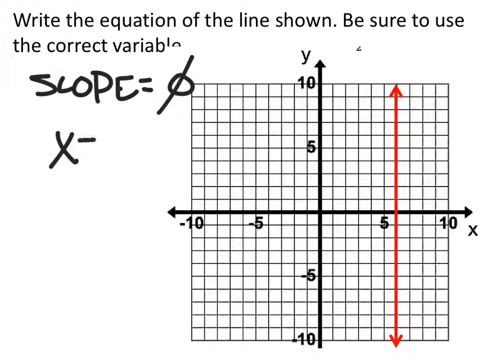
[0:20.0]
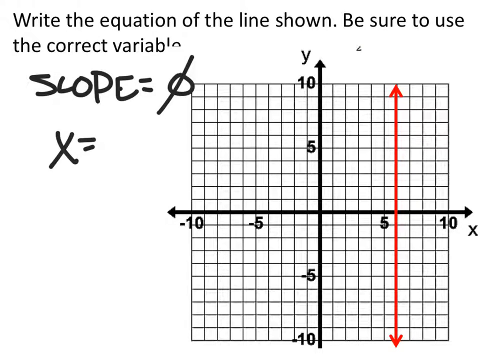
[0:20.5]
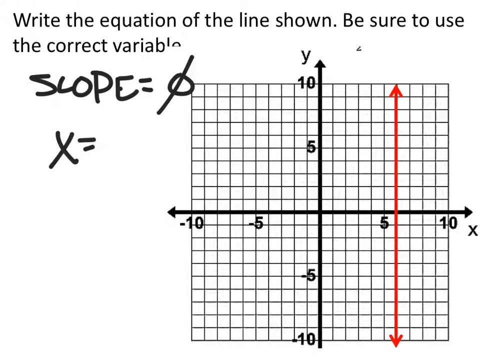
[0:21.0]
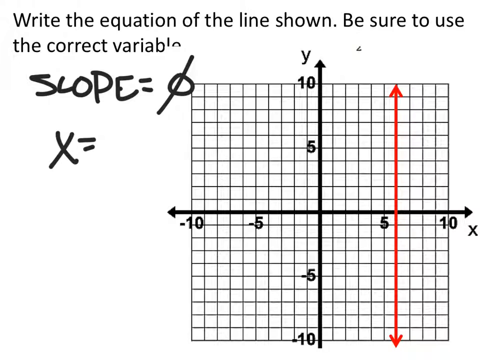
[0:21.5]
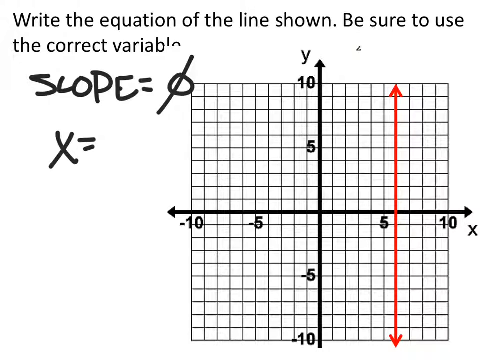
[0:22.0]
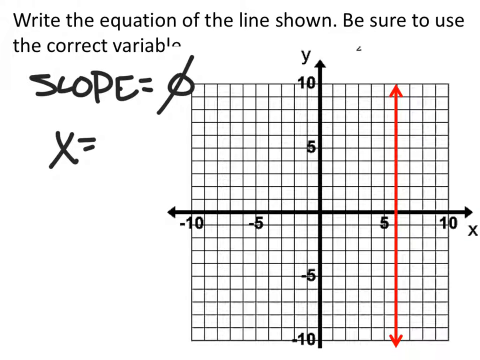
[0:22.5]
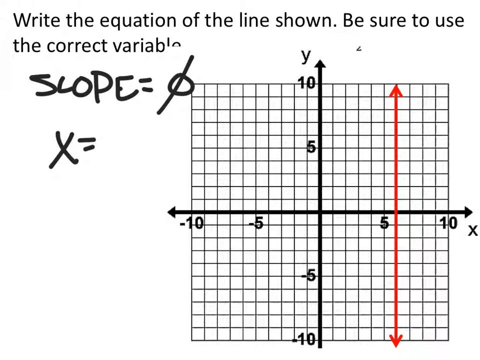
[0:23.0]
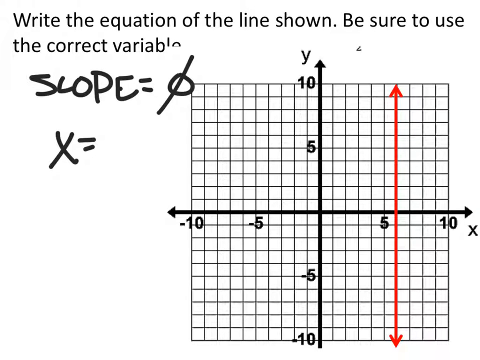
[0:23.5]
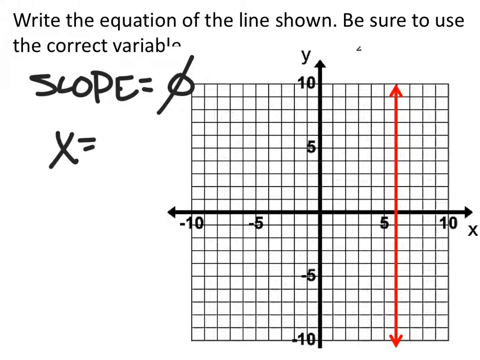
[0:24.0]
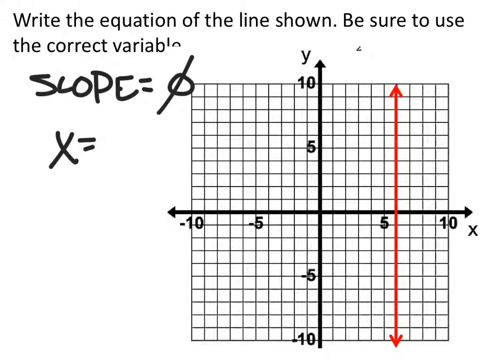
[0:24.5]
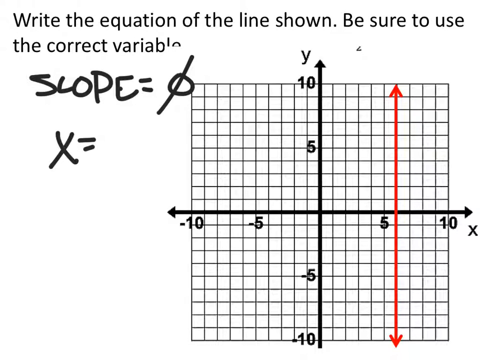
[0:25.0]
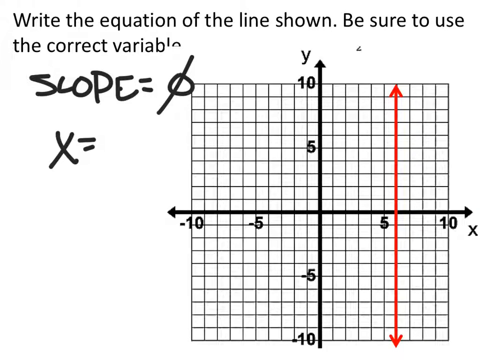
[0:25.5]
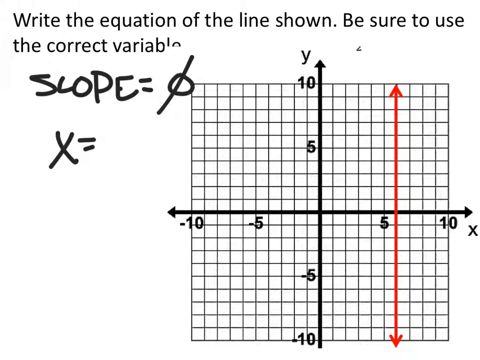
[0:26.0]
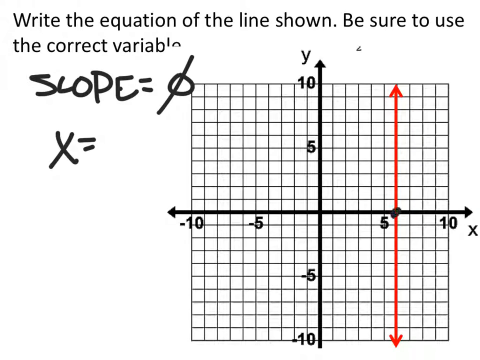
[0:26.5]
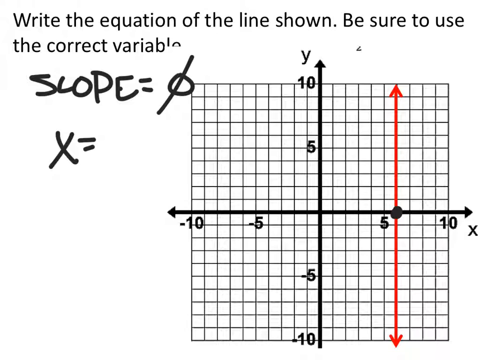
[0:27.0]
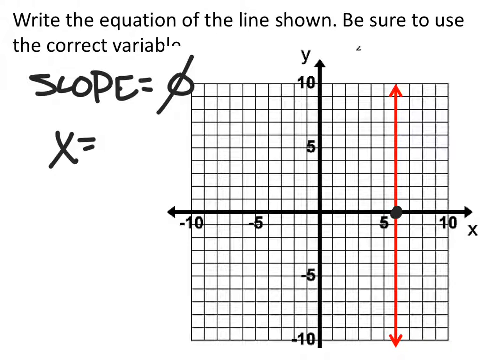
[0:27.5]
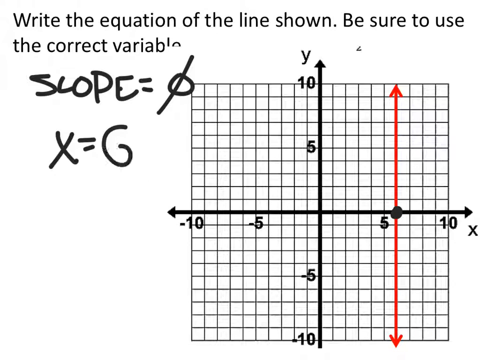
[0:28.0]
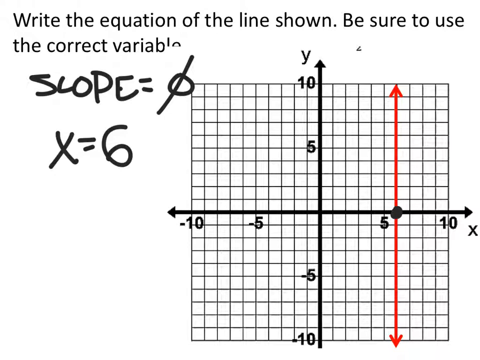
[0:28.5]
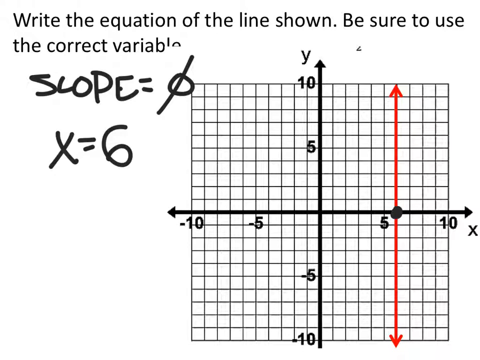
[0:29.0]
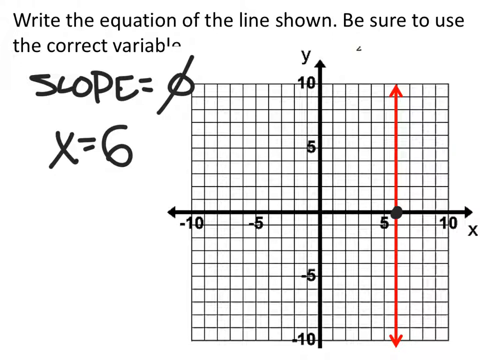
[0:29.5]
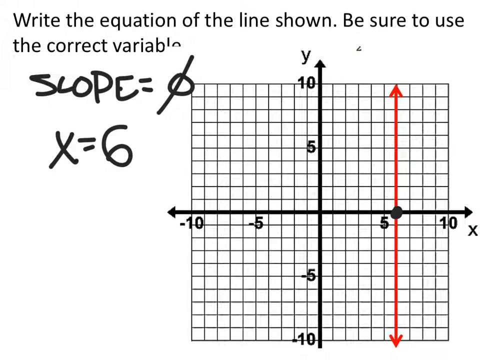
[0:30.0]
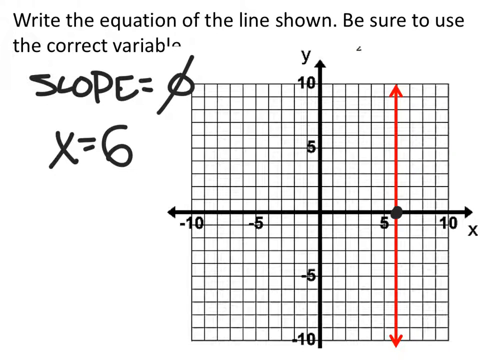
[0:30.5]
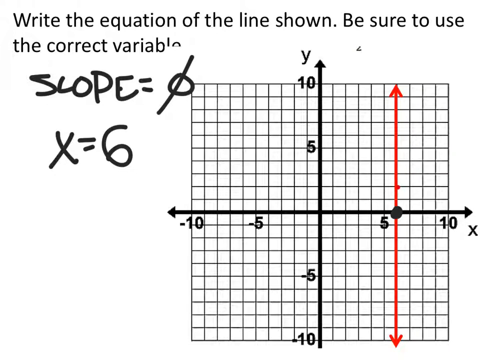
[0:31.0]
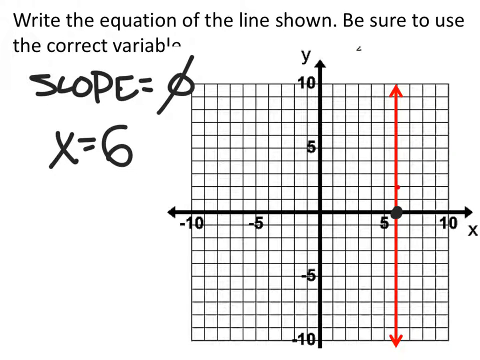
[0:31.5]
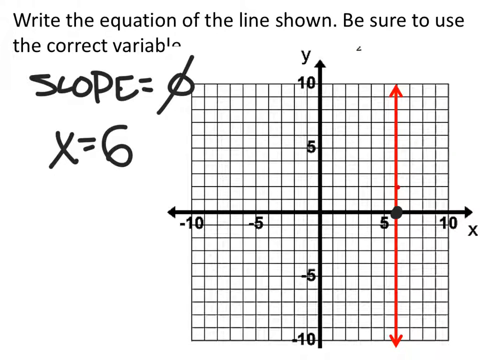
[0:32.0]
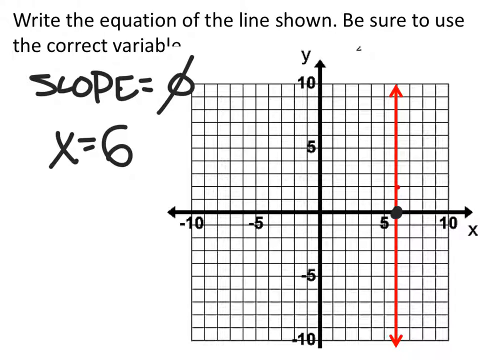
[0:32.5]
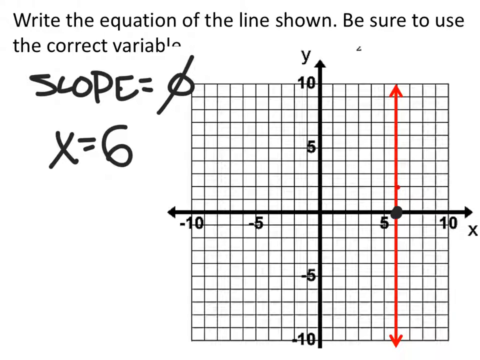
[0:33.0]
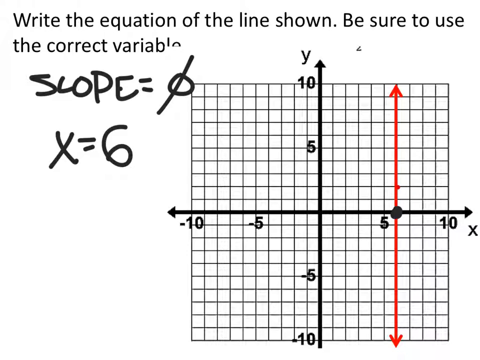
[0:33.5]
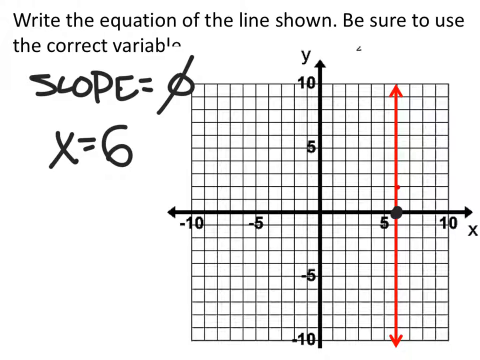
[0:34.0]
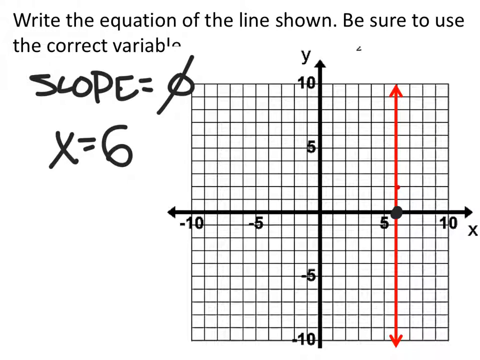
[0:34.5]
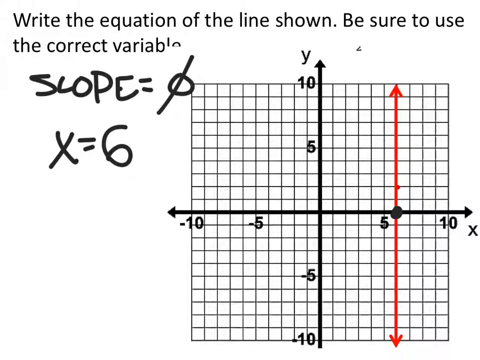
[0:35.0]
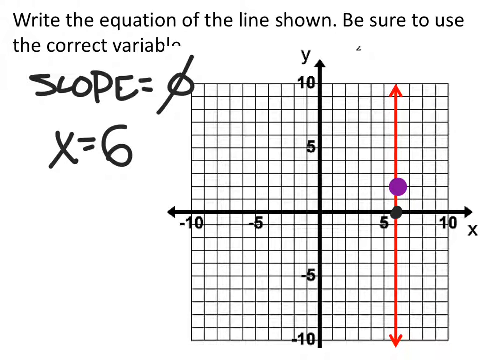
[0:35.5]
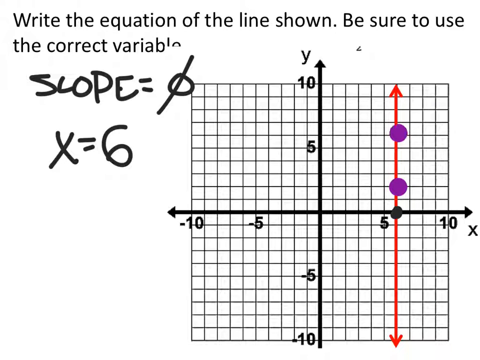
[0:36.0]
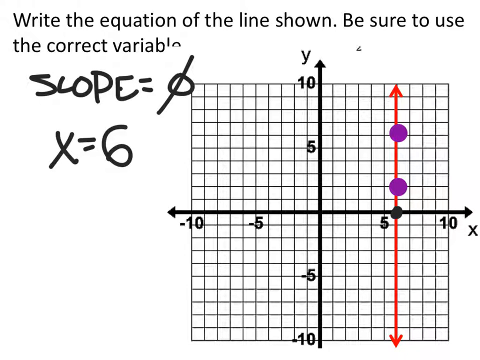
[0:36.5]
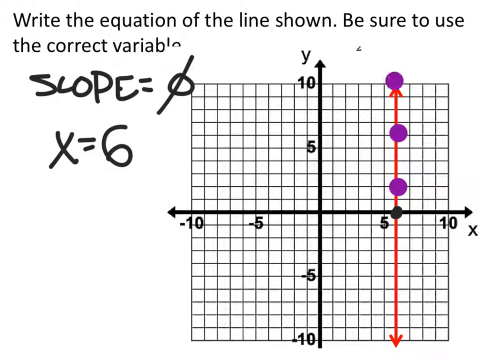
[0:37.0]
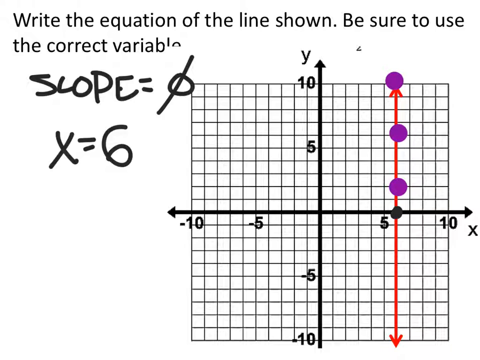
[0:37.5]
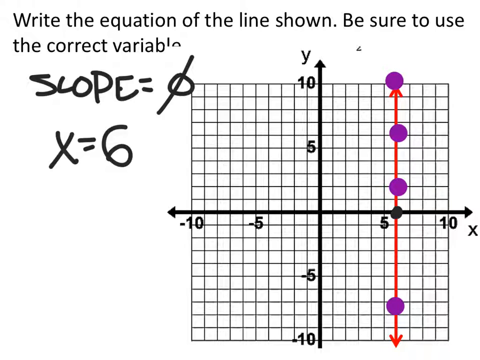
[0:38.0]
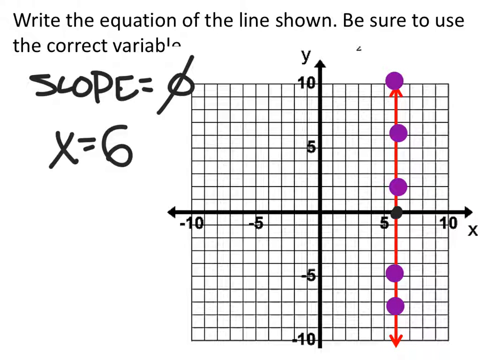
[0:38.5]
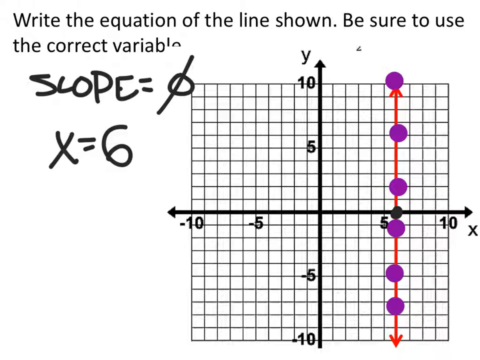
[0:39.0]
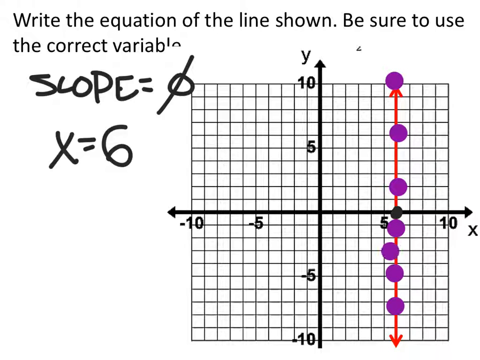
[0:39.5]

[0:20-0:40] The work on the equation continues. The graph has a red arrow on it. Written on the page is slope = 0, and then a cross, a dash, is put on the 0. There is also x = 6 written, apparently as an example of how the equation should be. Purple dots appear to be covering the red arrow. Black arrows divide the graph into four and are labeled Y and X. The background is white, possibly a board.